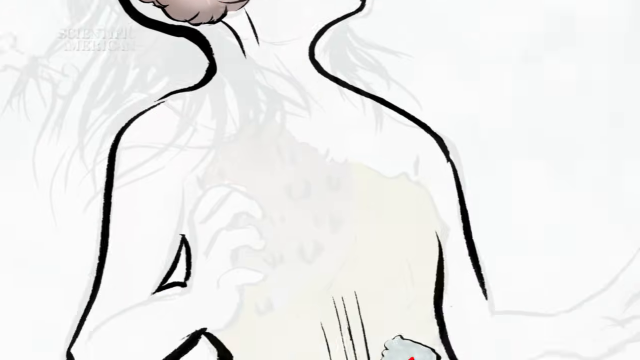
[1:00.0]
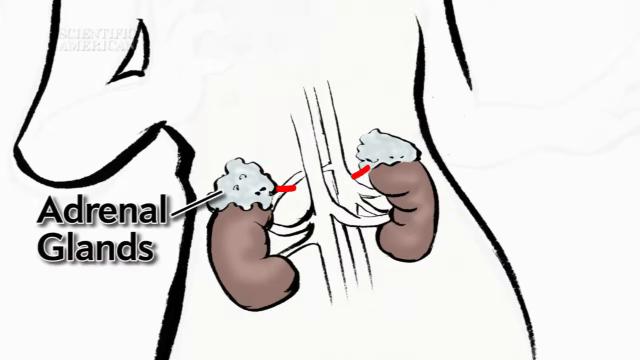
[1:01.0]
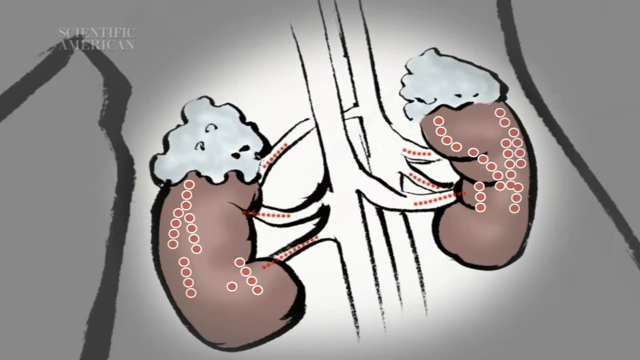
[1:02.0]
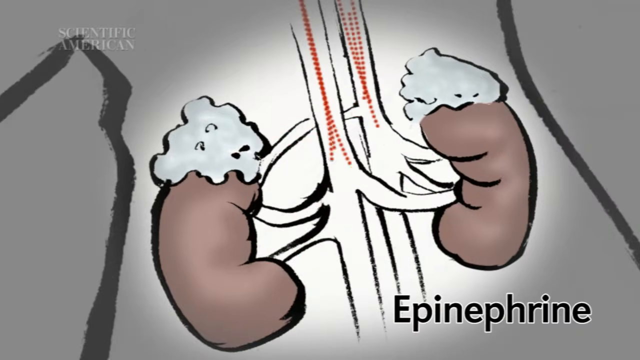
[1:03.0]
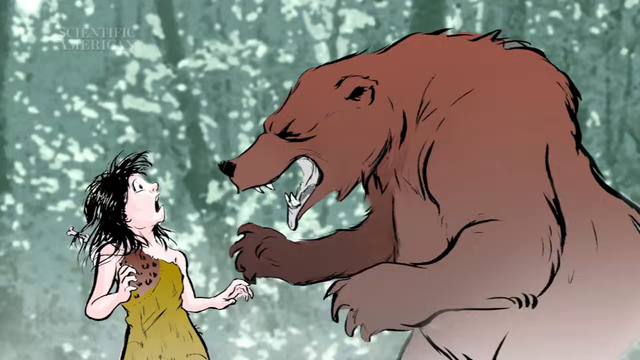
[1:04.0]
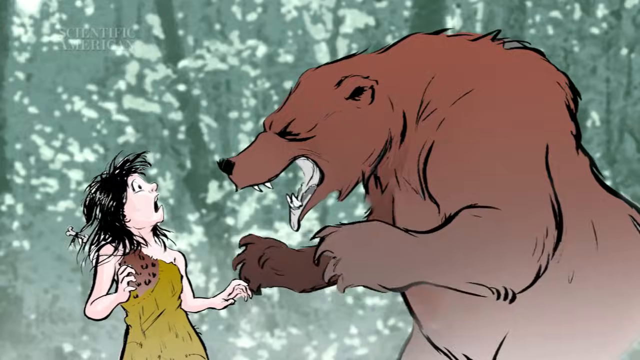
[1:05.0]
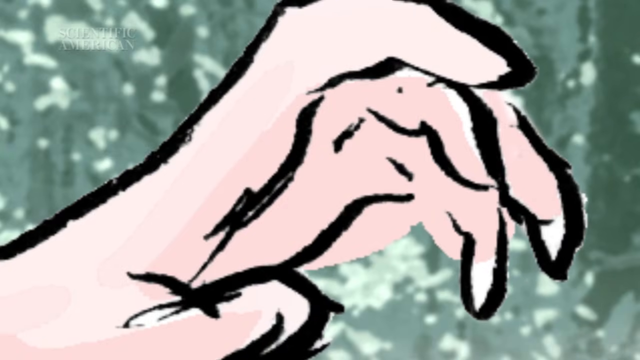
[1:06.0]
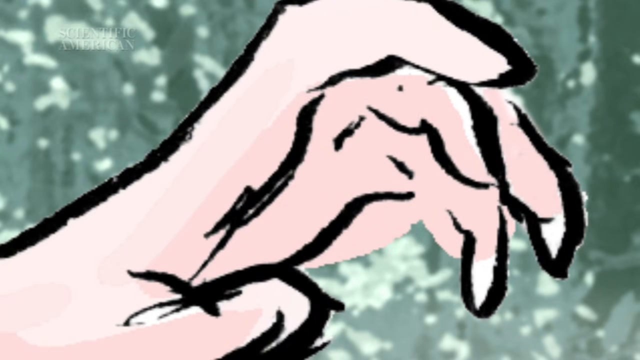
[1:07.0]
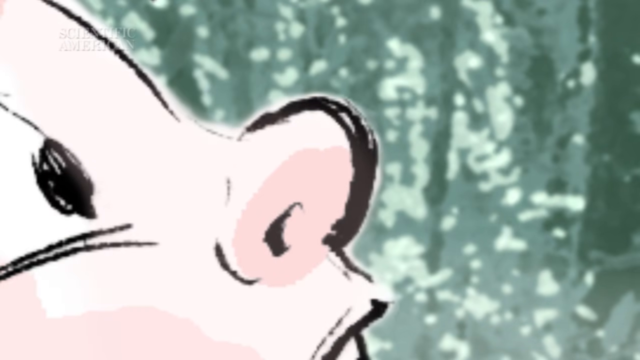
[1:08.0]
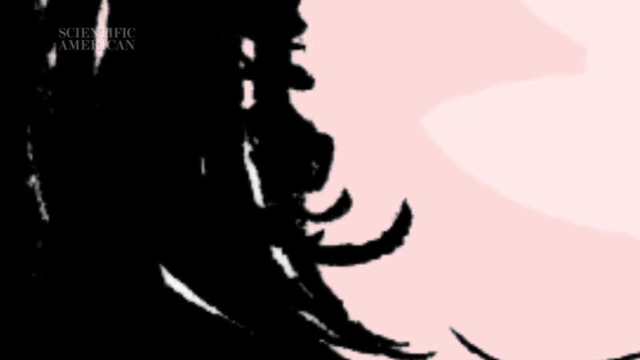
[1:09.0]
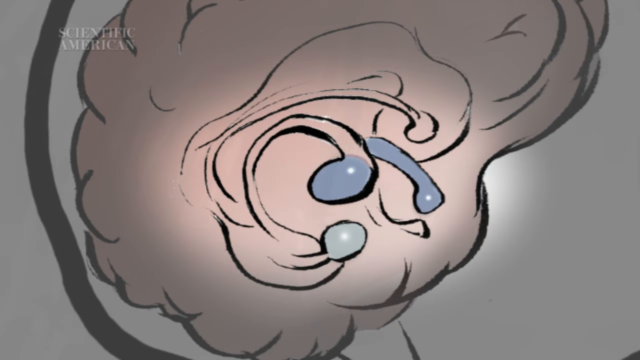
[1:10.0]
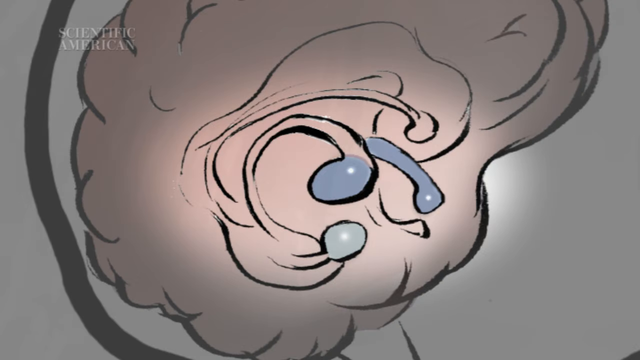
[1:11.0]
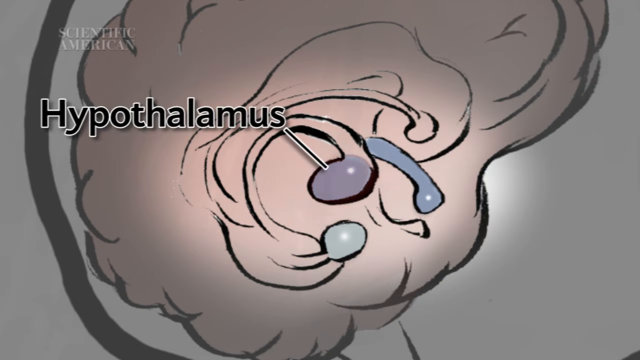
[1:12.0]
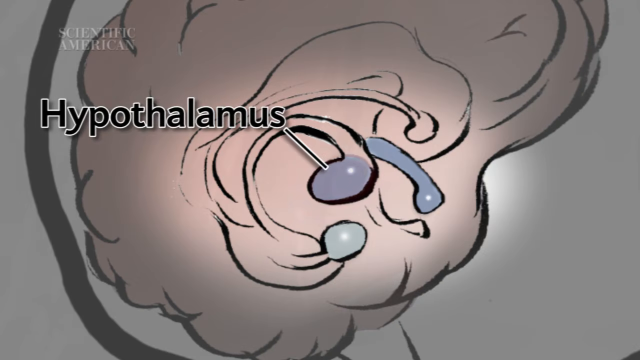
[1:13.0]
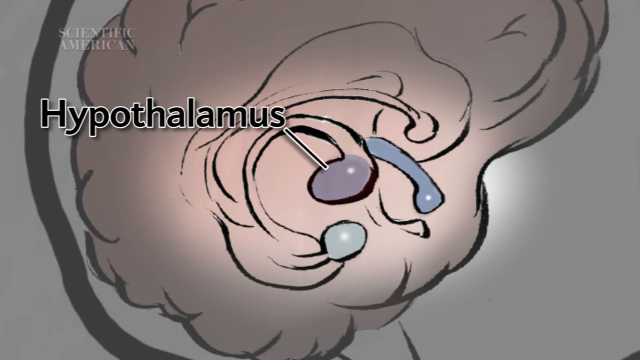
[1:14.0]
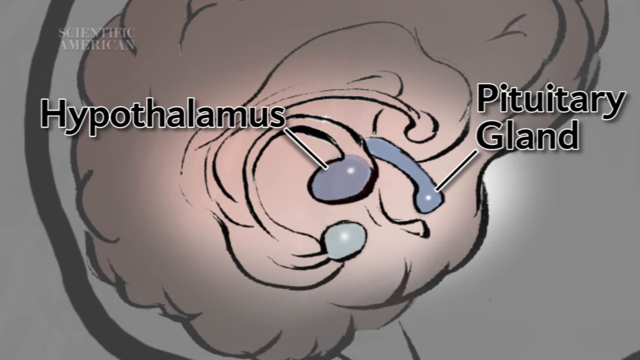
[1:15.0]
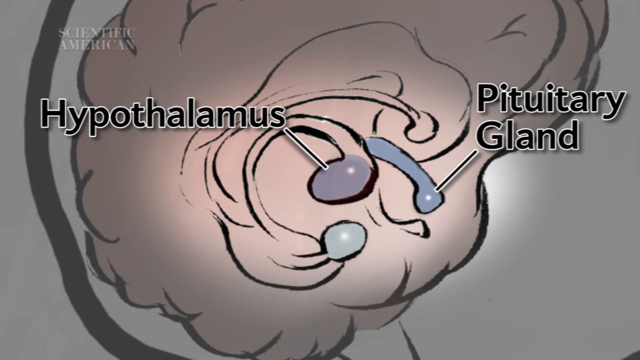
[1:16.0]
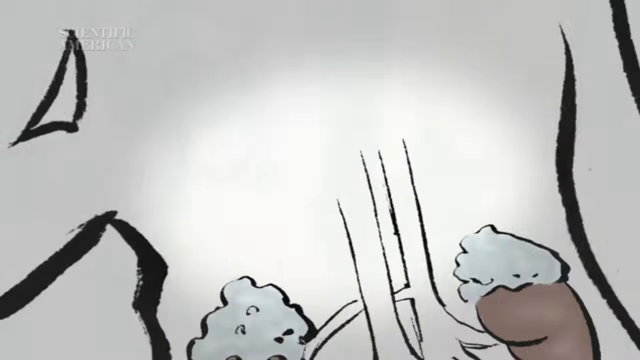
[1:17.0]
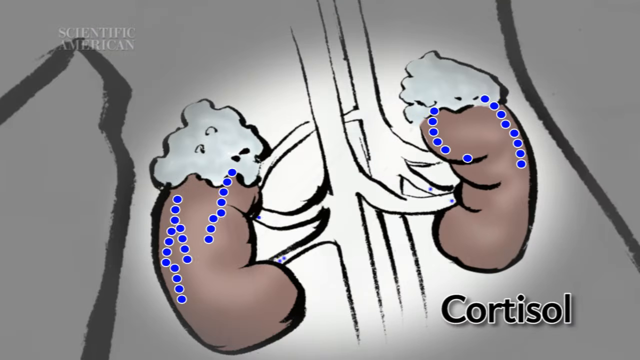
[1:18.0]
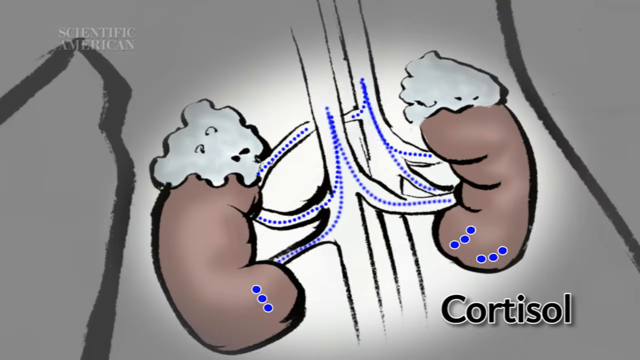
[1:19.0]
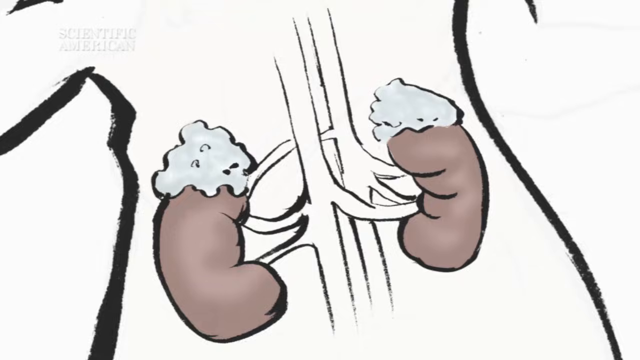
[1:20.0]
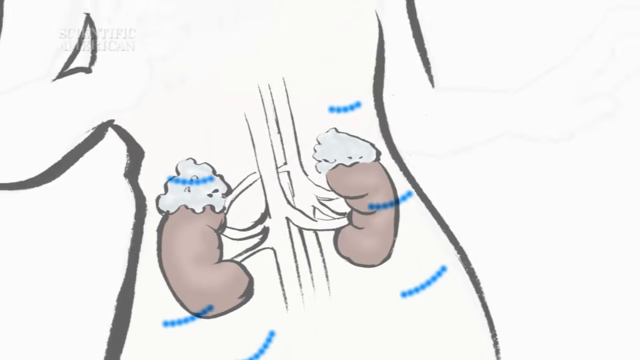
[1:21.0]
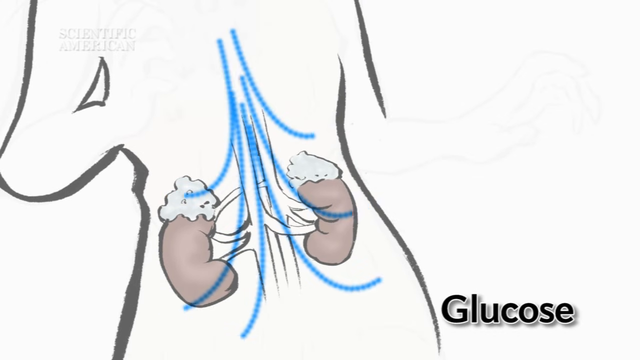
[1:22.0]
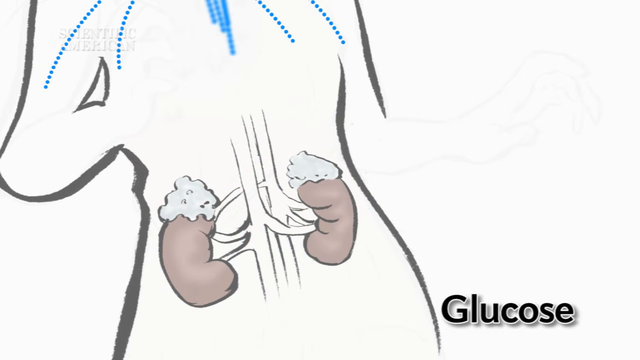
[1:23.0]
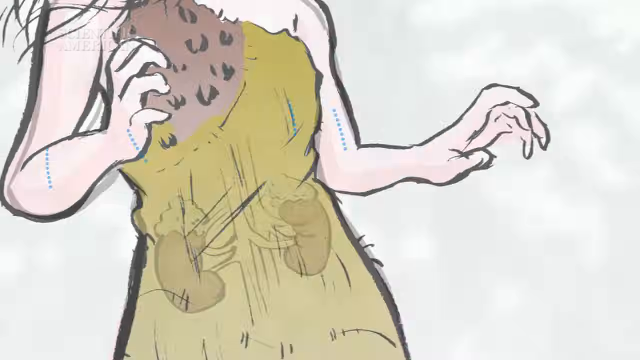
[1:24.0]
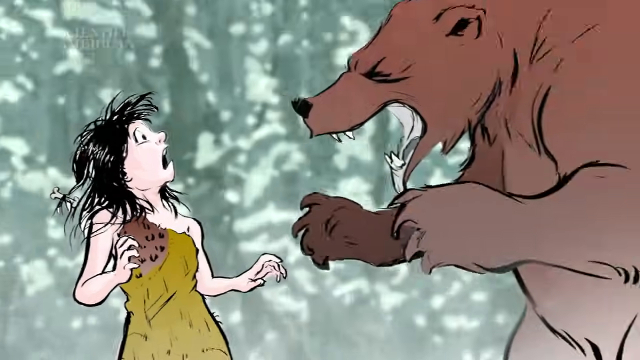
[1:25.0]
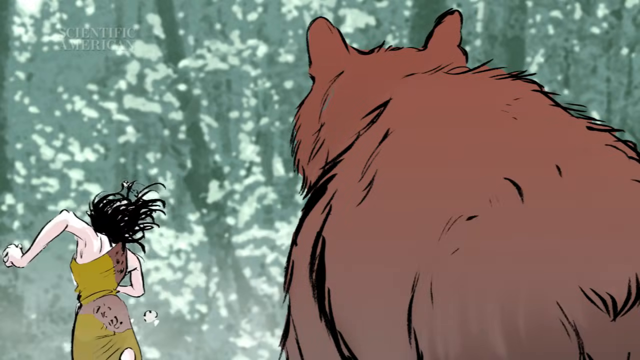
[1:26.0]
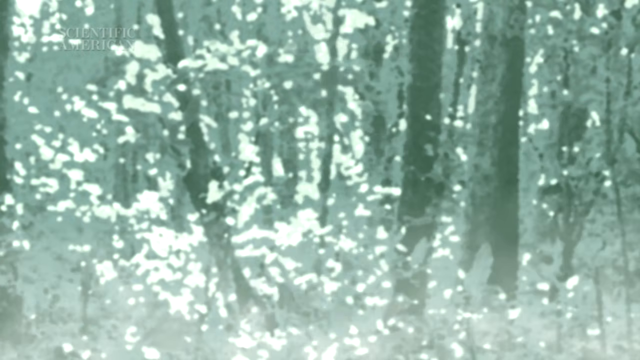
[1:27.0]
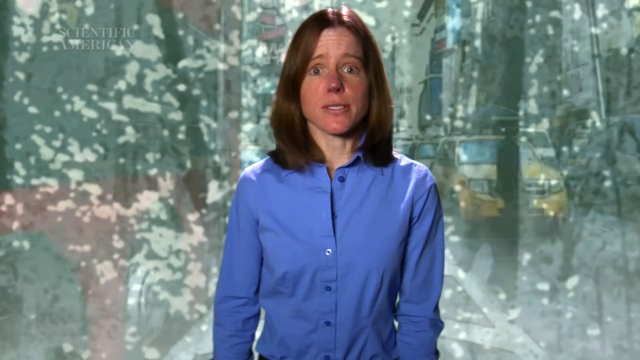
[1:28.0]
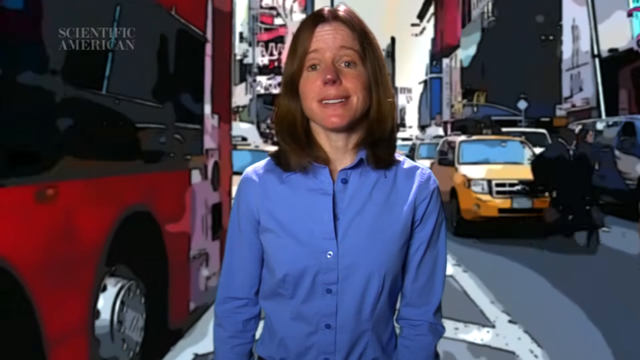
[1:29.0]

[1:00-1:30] The signal from her brain goes to her adrenal glands and then travels back up toward her brain. The video returns to the scene where the huge bear has approached her; it stands on its back feet, roars and menaces her with its claws. A close-up of her hand and nose follows, apparently showing skin flushed because of adrenaline. Back inside her head, the word "hypothalamus" pops up again, pointing to the same section as before, which is pulsating. Then the words "pituitary gland" pop up and point to another section, and the view goes back down into her body, where blue lines representing cortisol rush back up and throughout her body. Back in the scene with the bear, the woman turns around and takes off running. The video then returns to Times Square, New York.